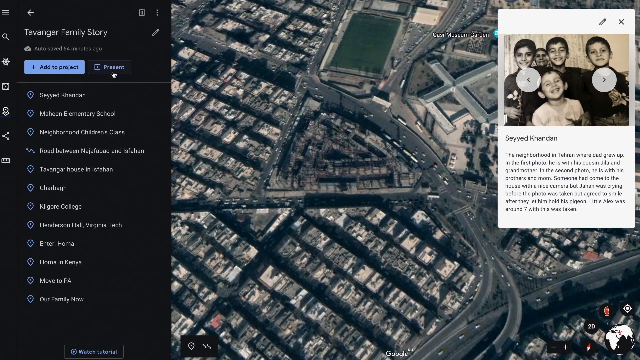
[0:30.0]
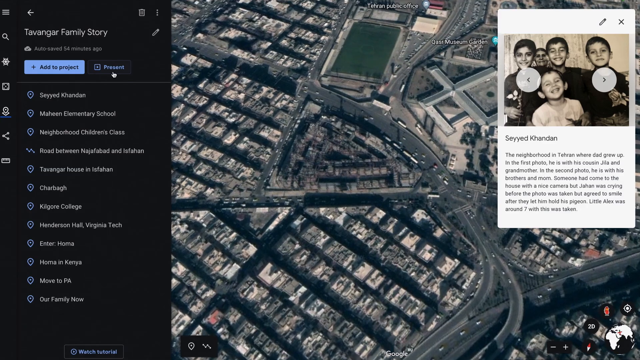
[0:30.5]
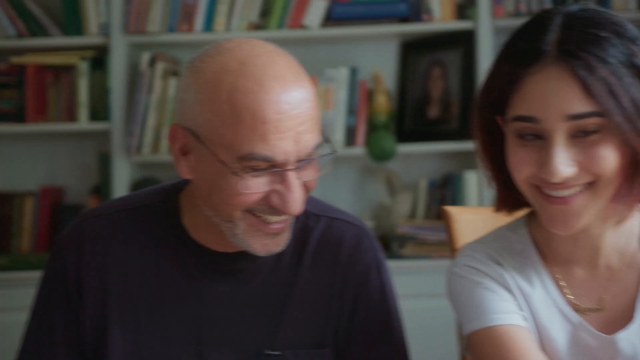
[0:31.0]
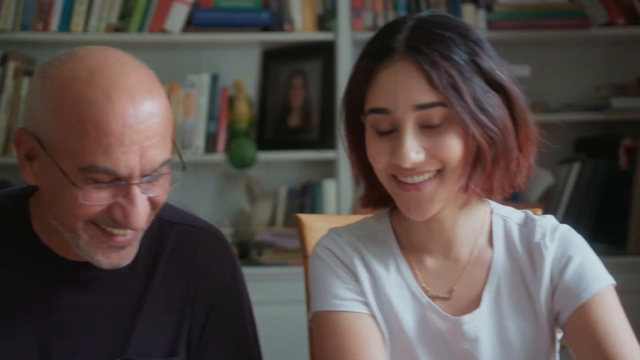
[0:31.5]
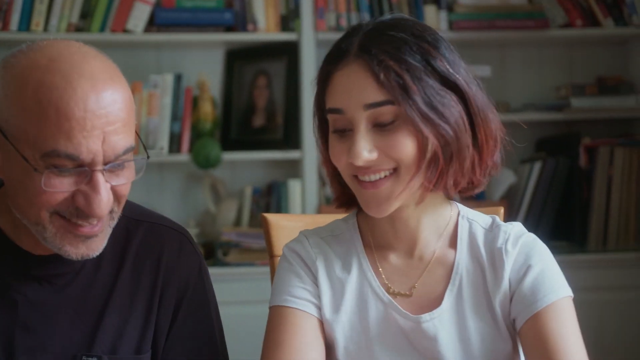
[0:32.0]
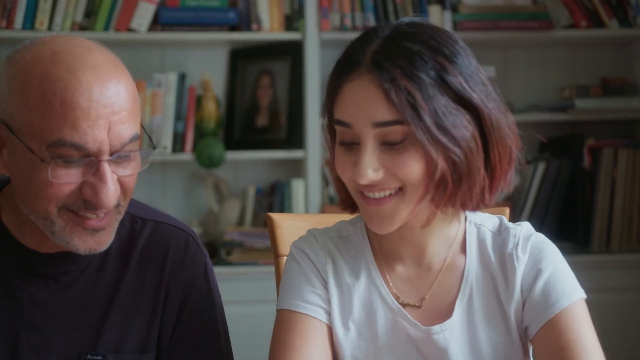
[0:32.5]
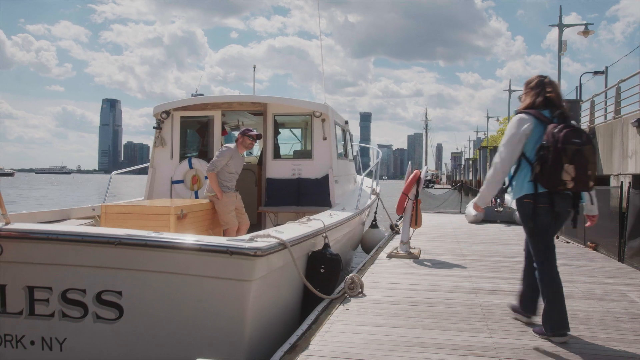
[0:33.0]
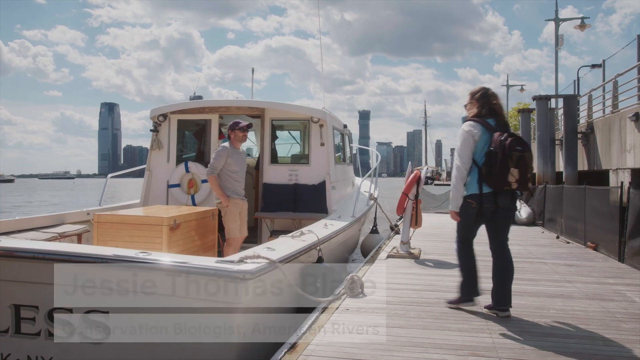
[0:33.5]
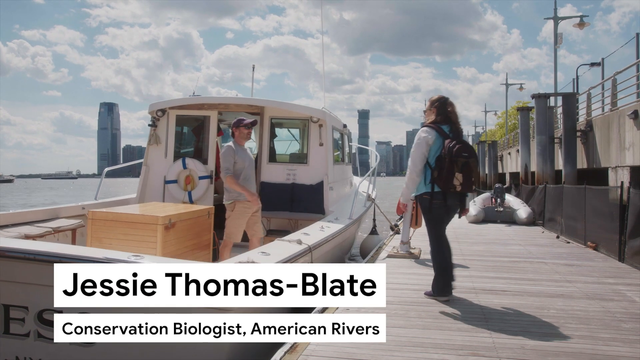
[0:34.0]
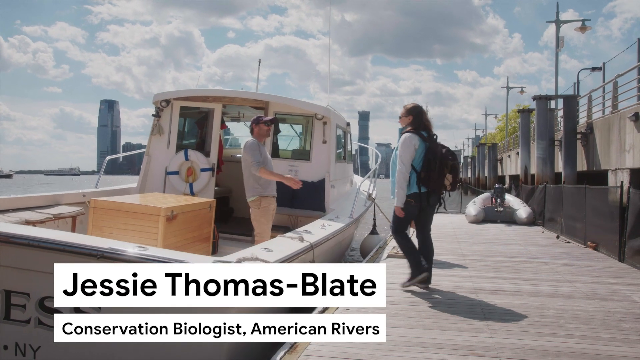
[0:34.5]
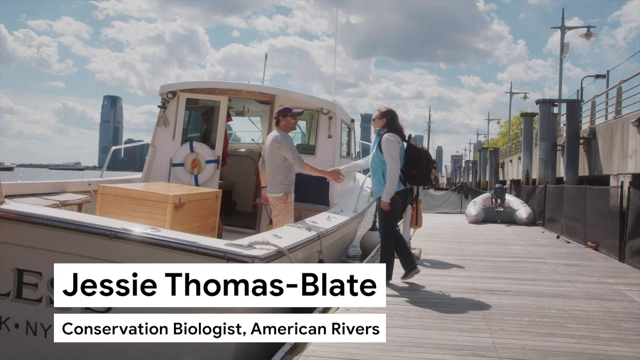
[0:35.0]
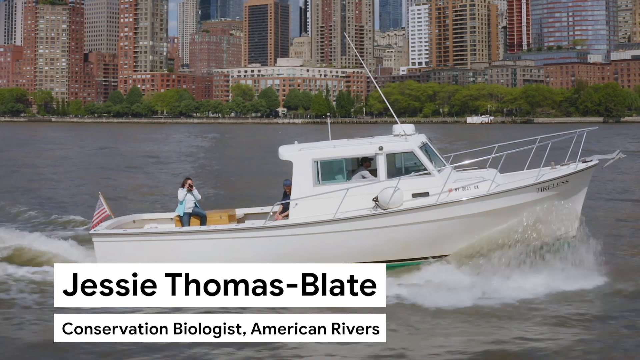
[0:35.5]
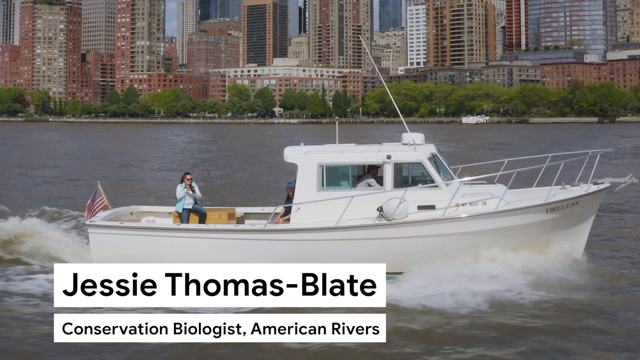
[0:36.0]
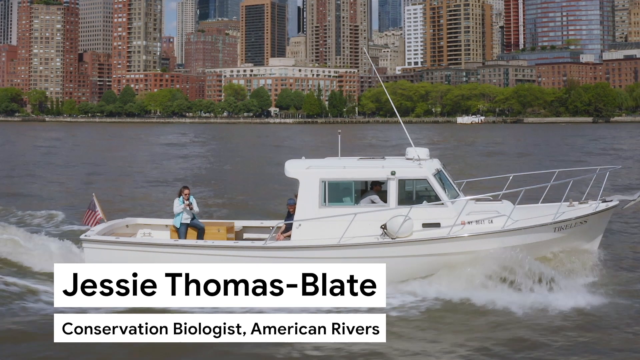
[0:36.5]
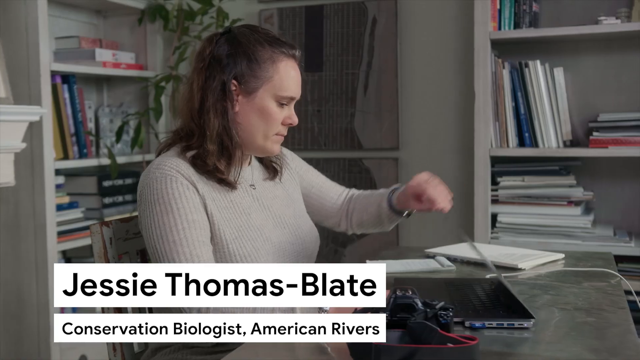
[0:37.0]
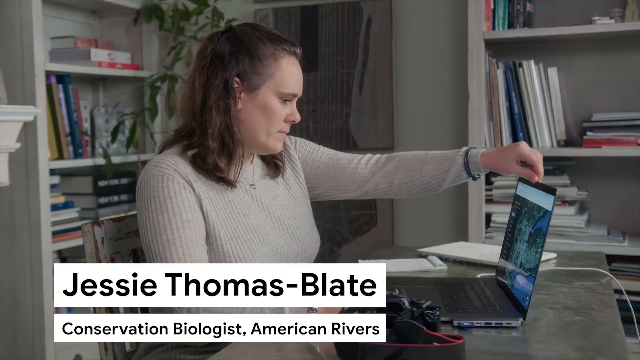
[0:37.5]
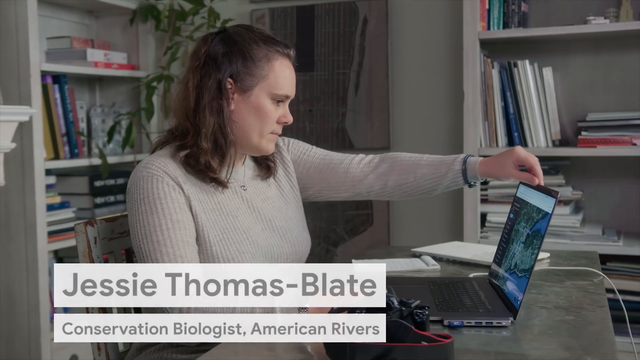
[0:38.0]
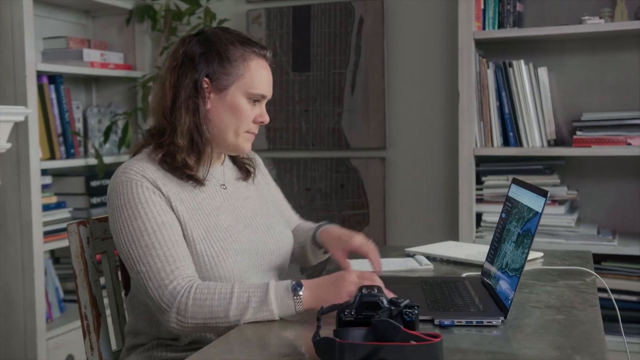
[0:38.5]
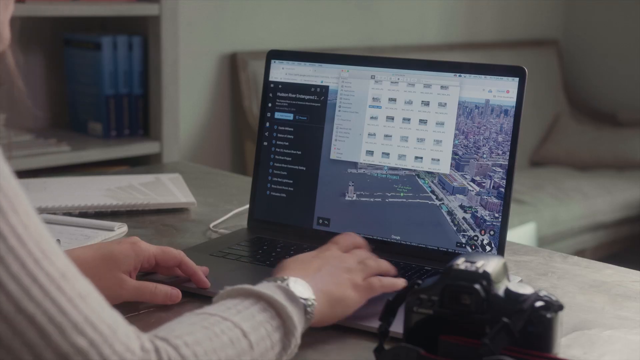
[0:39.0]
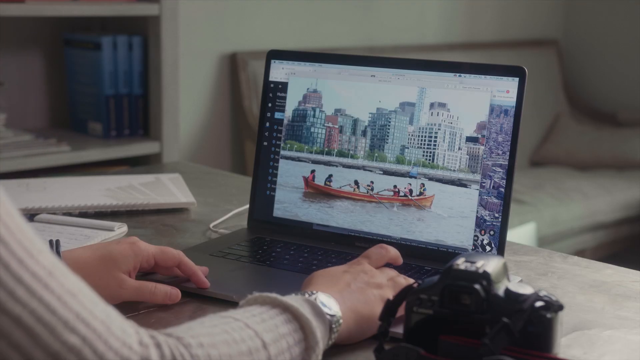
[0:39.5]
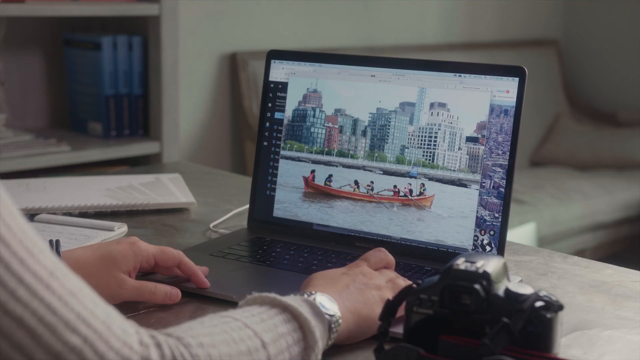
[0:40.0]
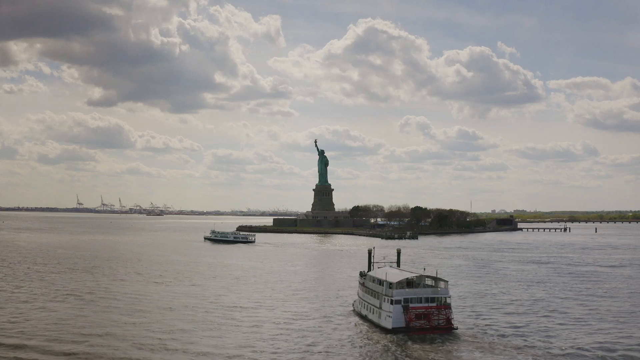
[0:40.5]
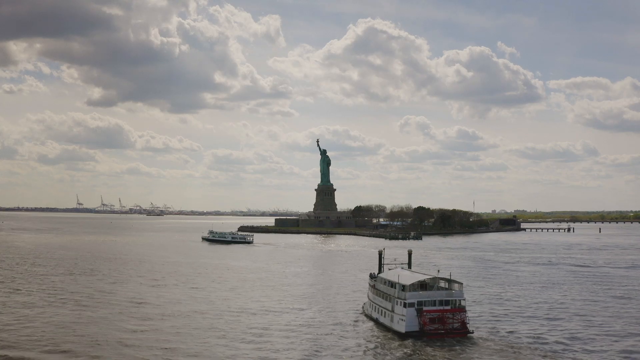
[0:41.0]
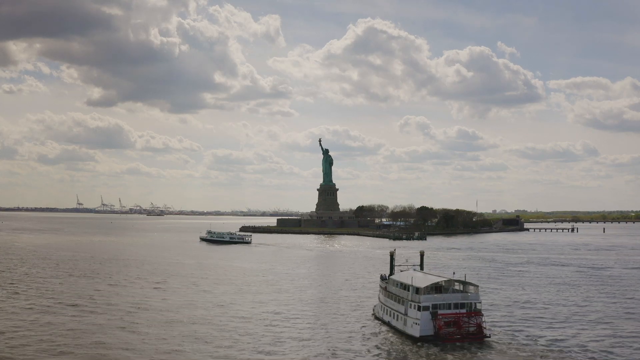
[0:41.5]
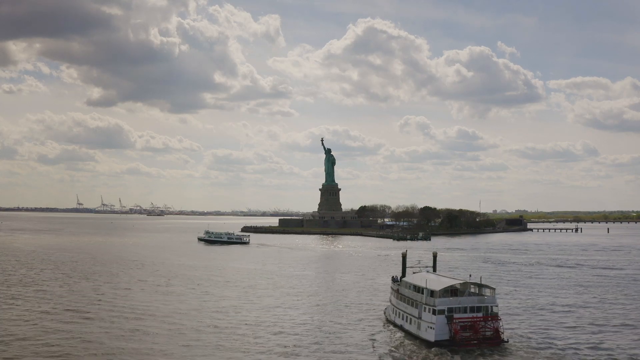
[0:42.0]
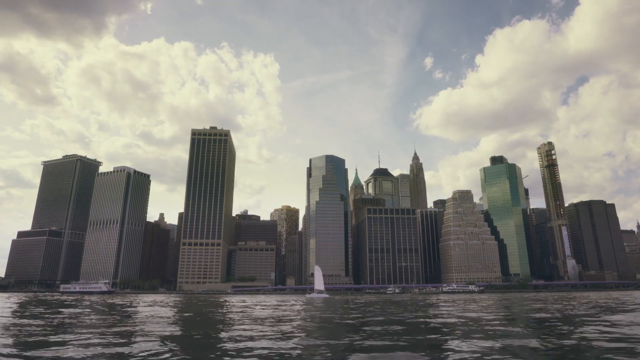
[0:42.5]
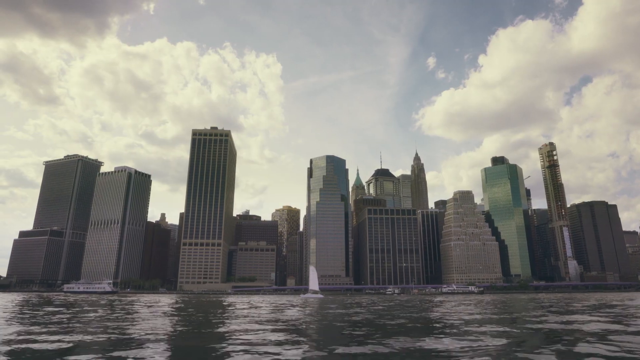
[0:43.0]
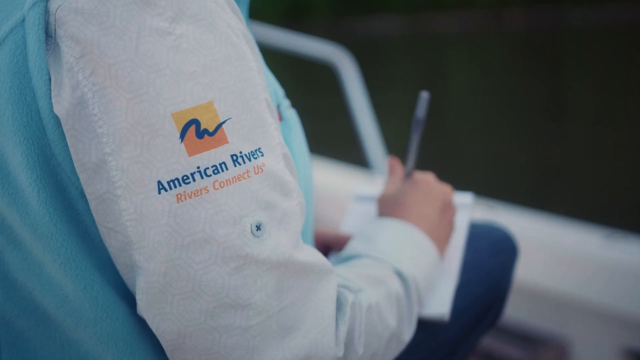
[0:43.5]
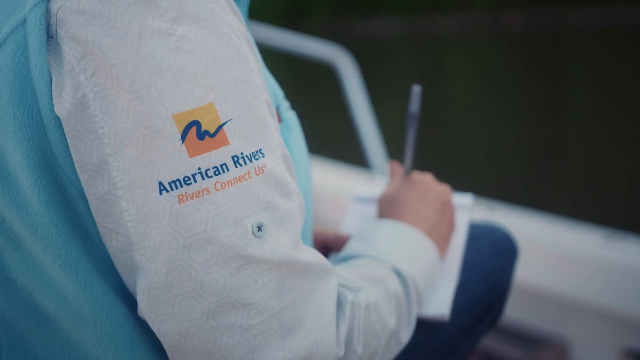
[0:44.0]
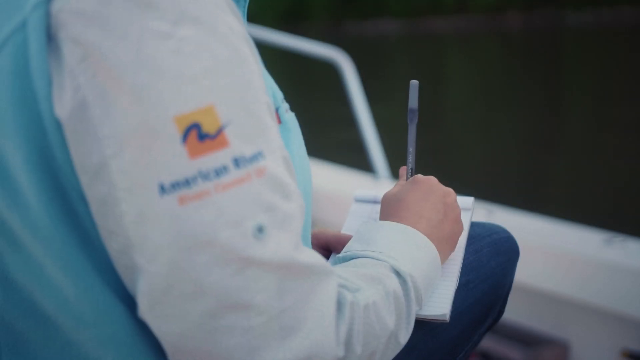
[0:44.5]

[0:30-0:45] The young woman and the older man, who wears glasses, look at the computer screen at a map, then at a picture of many family members with a description underneath. Both are smiling, and they look down, still sorting through photos. The next scene shows a woman walking along a dock to a boat, with her name on the screen: "Jesse Thomas Blate, conservation biologist, American Rivers". The boat then travels along the ocean, in what looks to be New York. The same woman, who appears to be in her 30s and wears a sweater, sits at her desk with her own laptop, viewing a picture of a very large orange-looking canoe with several people inside along a river. She is then shown taking photos from a boat that has a US flag on it. Another image shows the Statue of Liberty as the boat pulls in closer to it. Finally, a daytime skyline of New York City and its buildings appears close-up.